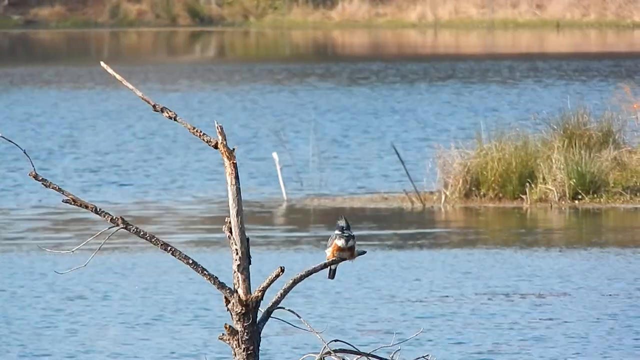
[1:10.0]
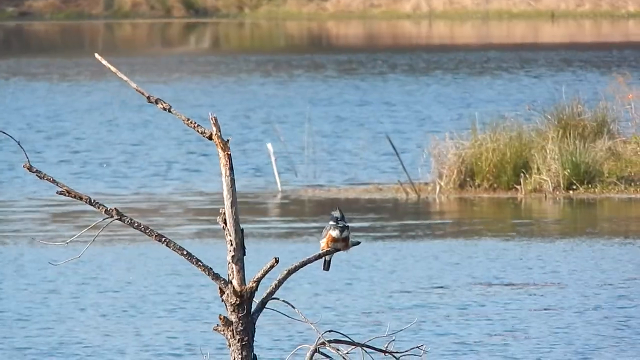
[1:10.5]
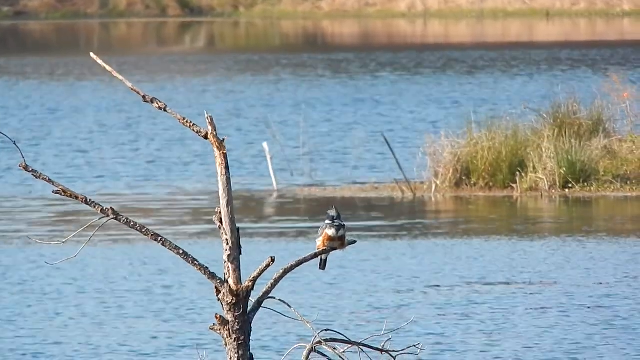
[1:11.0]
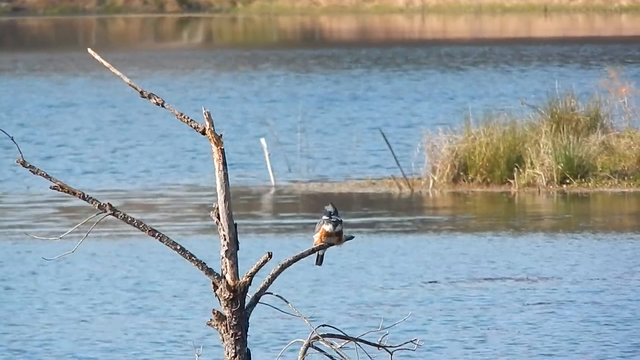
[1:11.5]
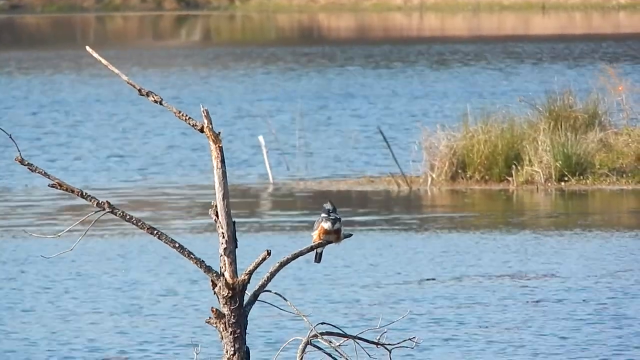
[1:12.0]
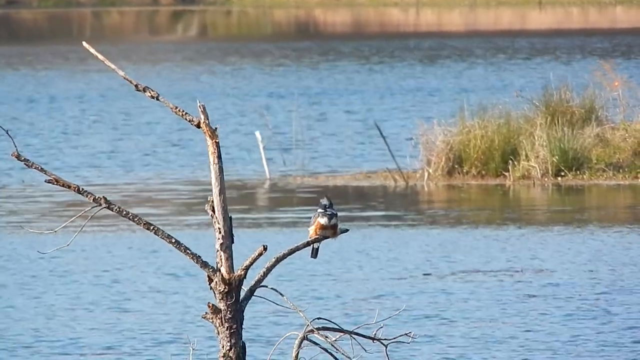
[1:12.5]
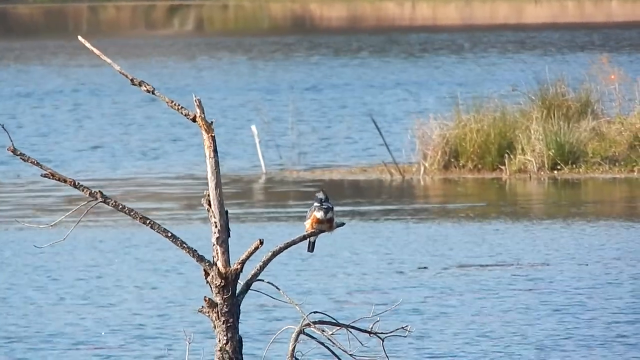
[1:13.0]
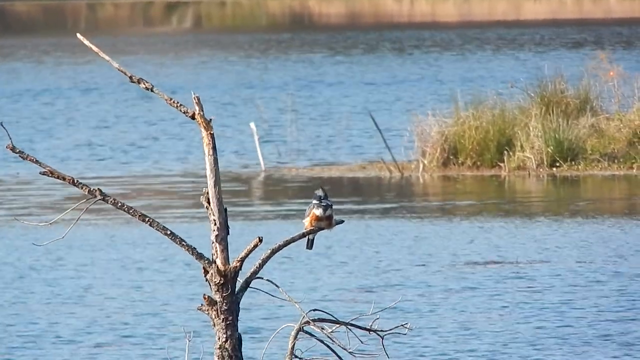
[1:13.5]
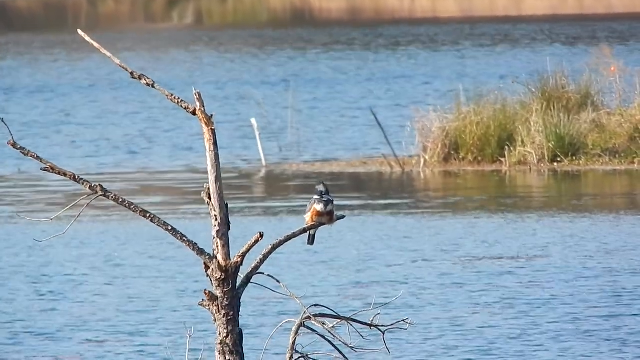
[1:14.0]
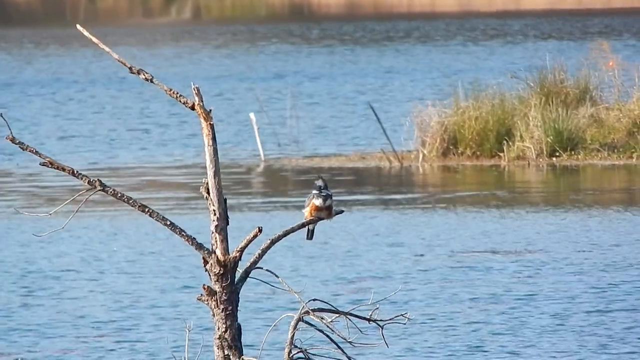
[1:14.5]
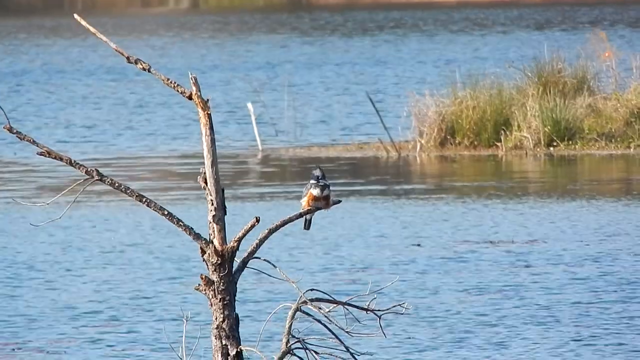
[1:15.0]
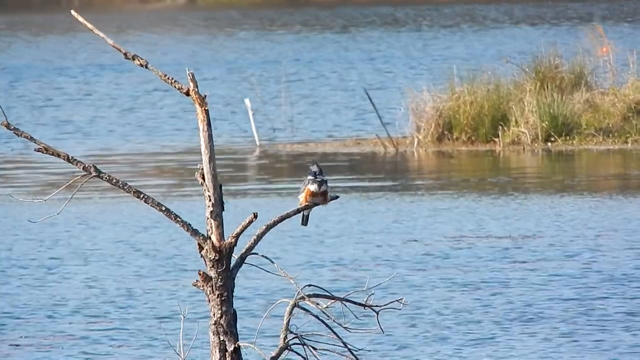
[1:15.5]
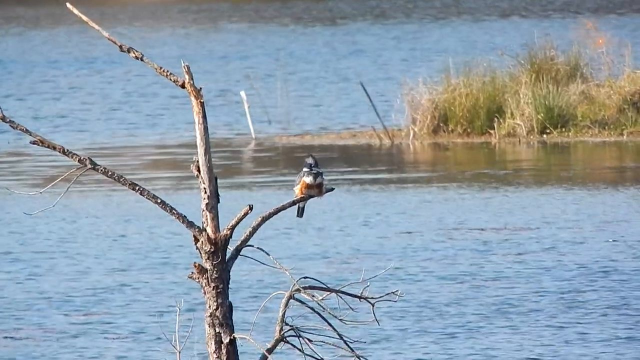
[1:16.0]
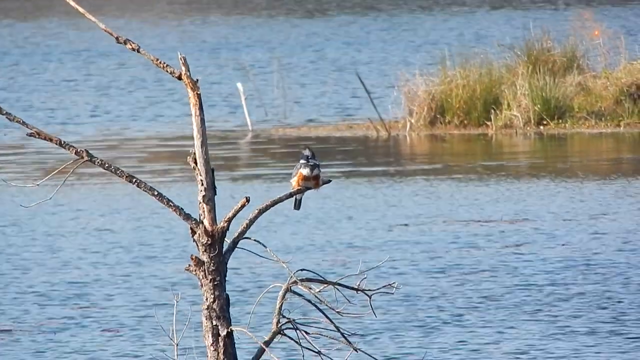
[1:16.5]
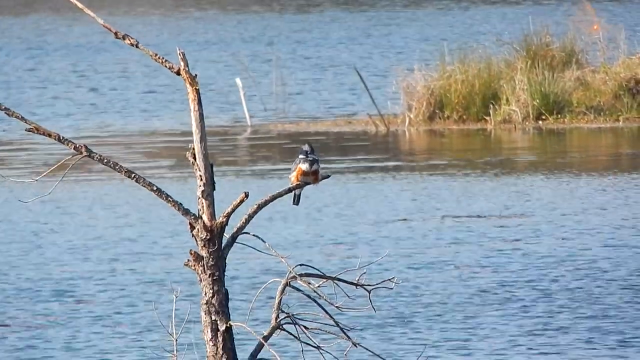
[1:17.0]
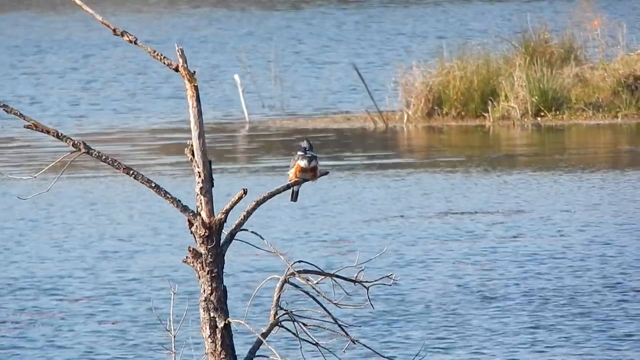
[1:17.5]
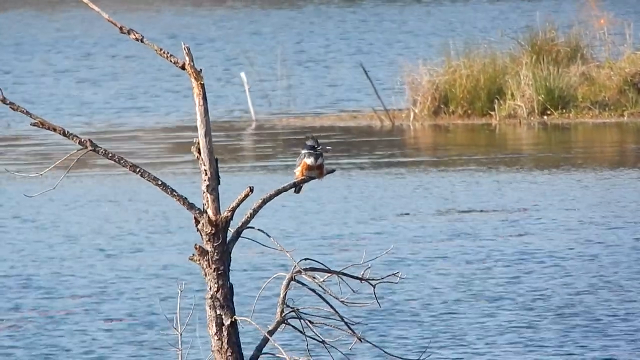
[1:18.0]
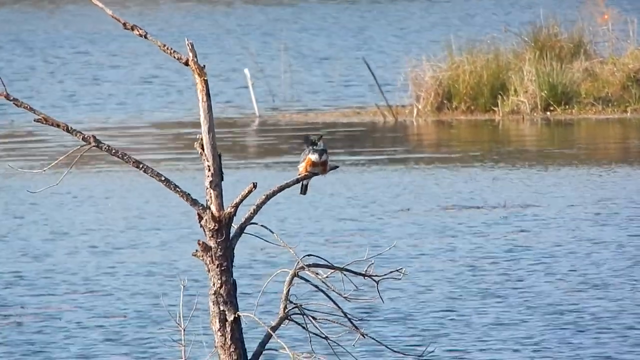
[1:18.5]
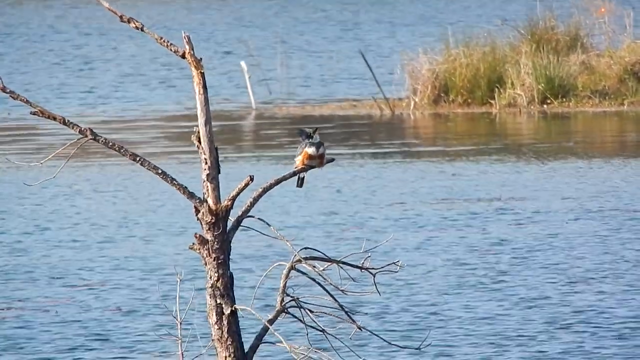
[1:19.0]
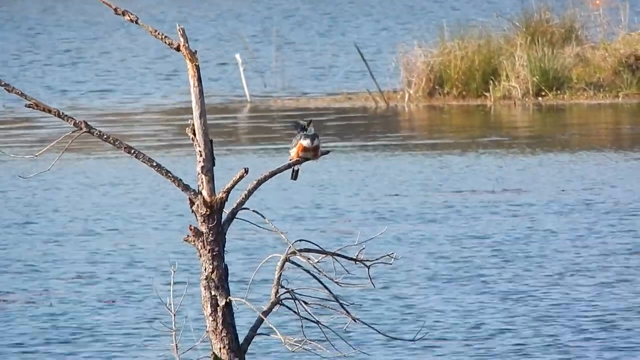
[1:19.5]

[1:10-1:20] A lake scene shows dry grass on the right-hand side of the screen, taking up about a third of the screen. In the middle is an old dead tree with four branches protruding from it. A woodpecker is perched on the longer right-hand branch; the other right-hand branch is shorter, about half the length of the longer one. On the left-hand side, two branches still have bark on them, but the rest of the tree has no bark. The woodpecker is very small, and its details are not easy to see, but it has dark tail feathers, a dark crest, and a reddish-brown breast. The bird looks around and is very alert. The lake is very placid except for small ripples visible on its surface.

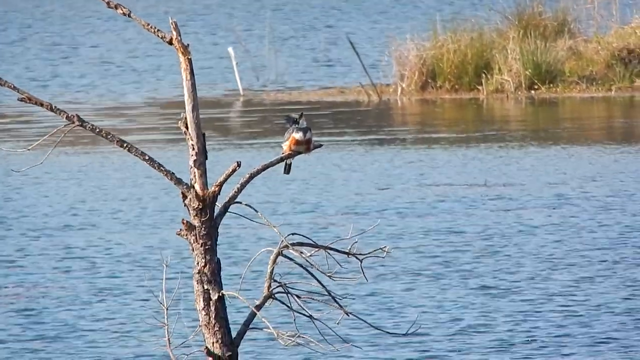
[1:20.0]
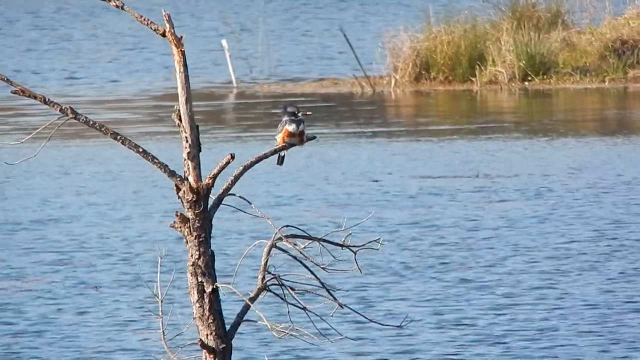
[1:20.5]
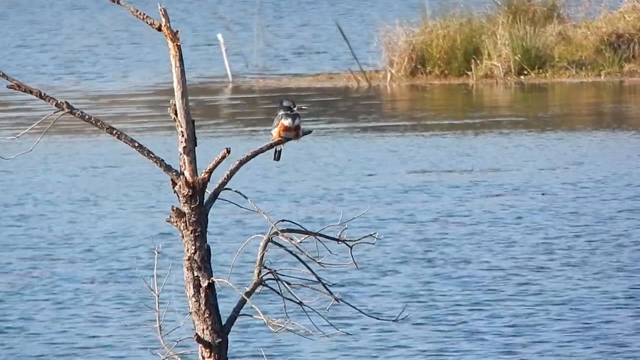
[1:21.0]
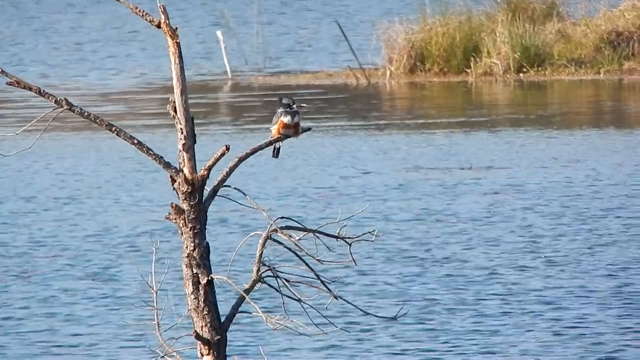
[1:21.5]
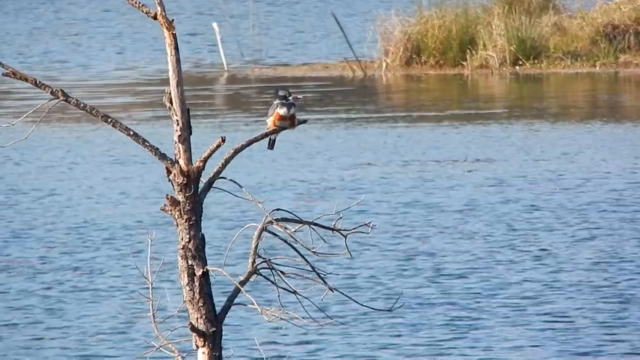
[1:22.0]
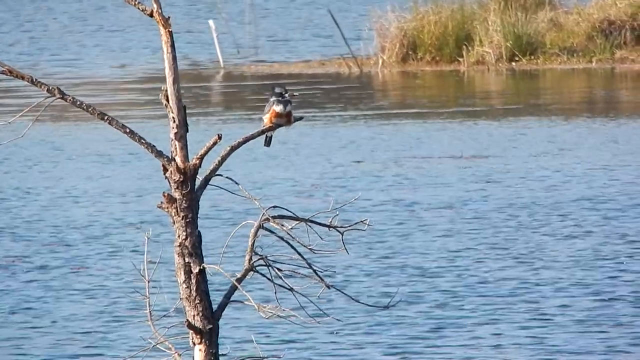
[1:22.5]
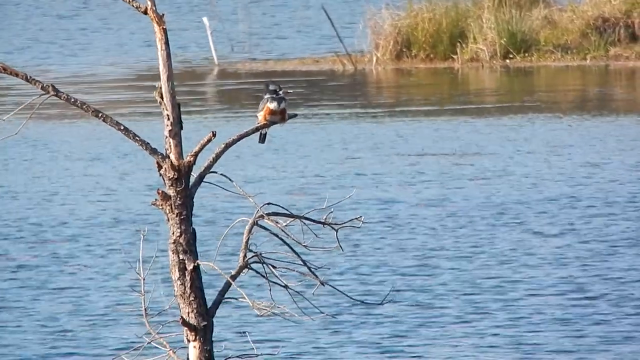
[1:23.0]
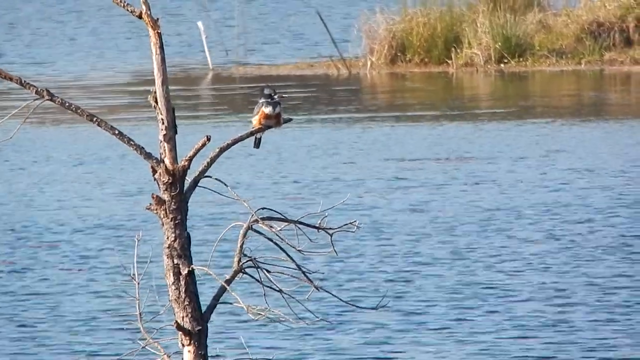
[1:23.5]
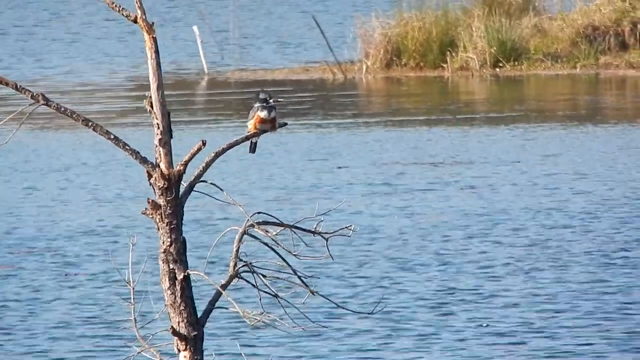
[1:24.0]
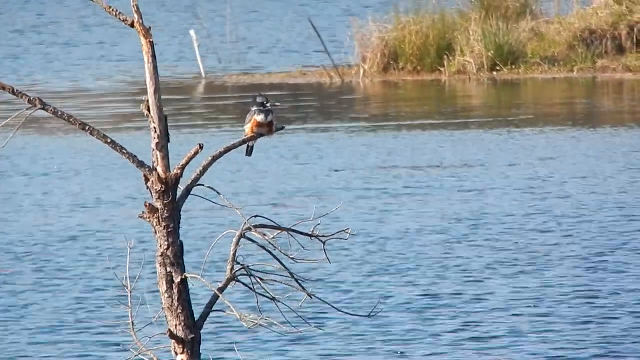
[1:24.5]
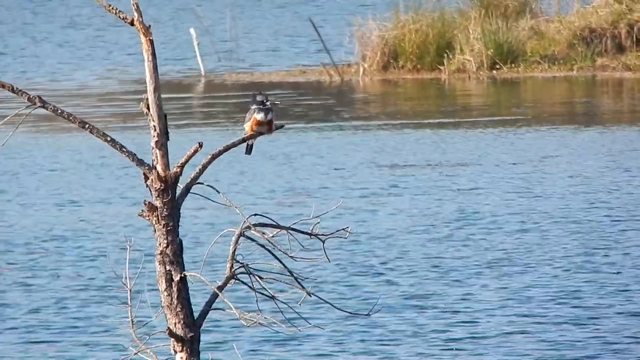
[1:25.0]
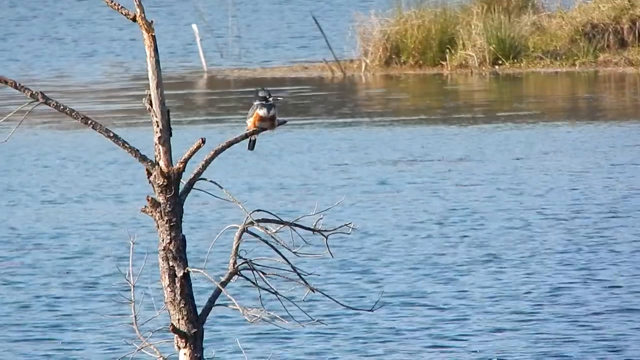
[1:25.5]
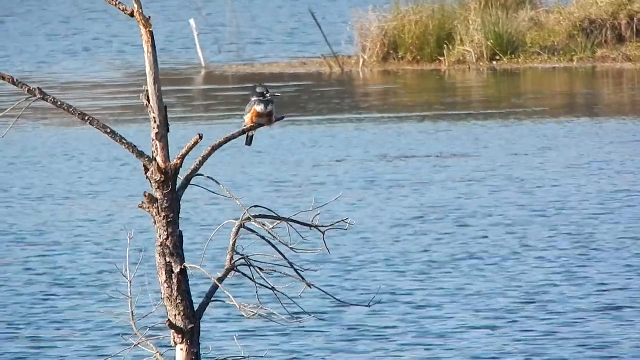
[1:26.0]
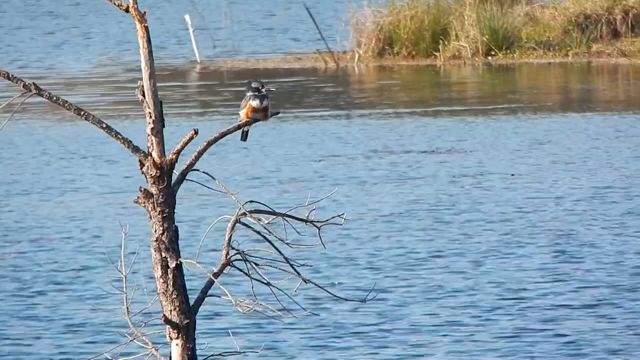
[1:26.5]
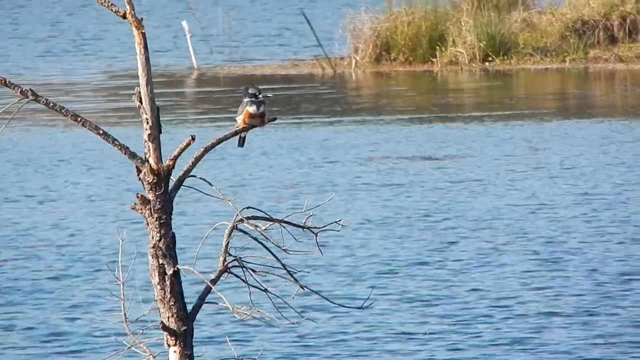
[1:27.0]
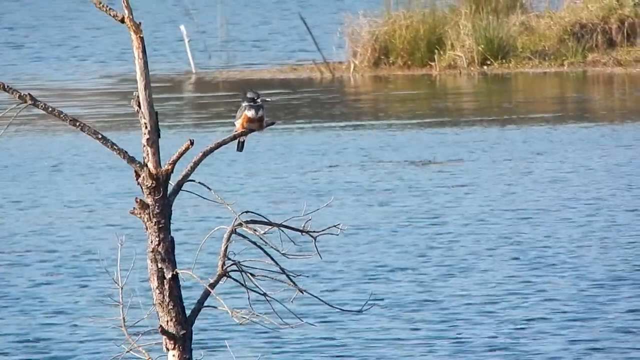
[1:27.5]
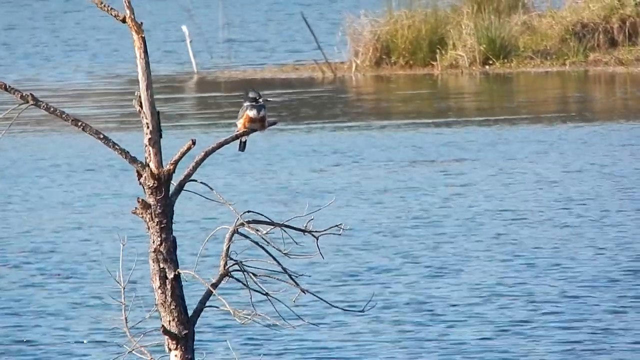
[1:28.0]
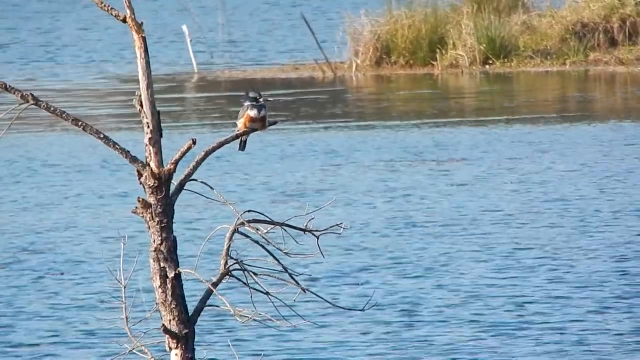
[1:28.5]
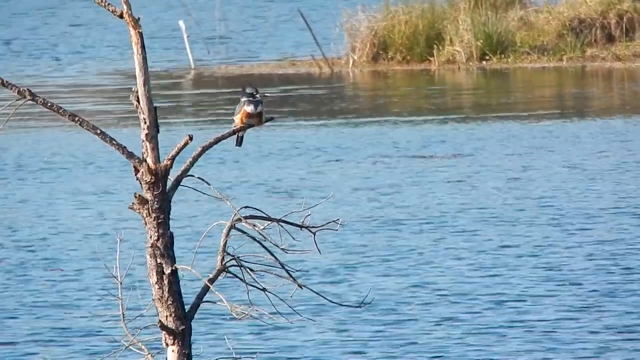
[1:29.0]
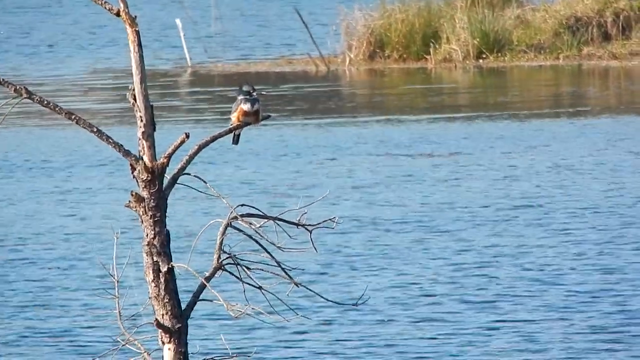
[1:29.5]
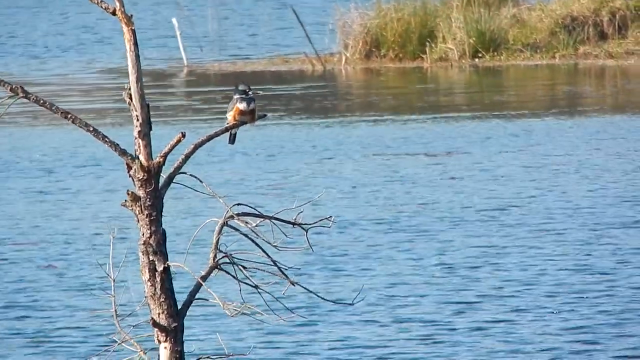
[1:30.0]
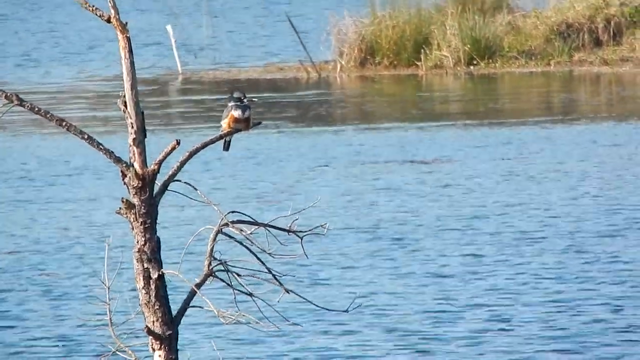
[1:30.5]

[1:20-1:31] A woodpecker sits on a branch in front of a stand of dry brown grass on the right-hand side of the screen. A lake is around the grass and behind the tree the bird is sitting on. The old dead tree has three branches protruding from the right and two protruding from the left. The bark has worn away on most of the tree, including the branch the bird is sitting on. The bird has dark tail feathers, a red breast, and feathers from its crest. The bird looks around. The lake is very placid, with ripples visible from the wind blowing.